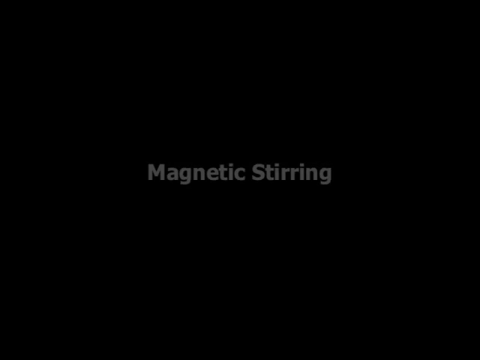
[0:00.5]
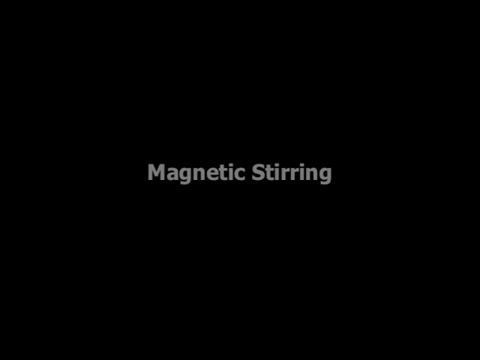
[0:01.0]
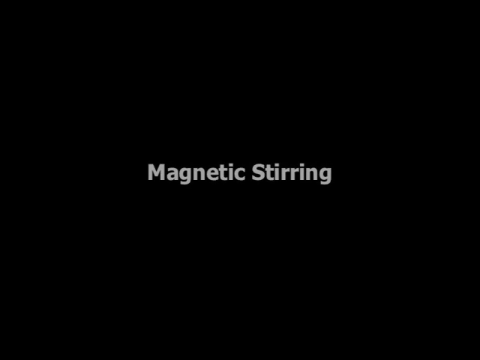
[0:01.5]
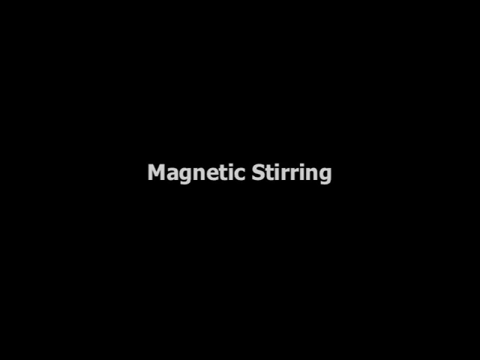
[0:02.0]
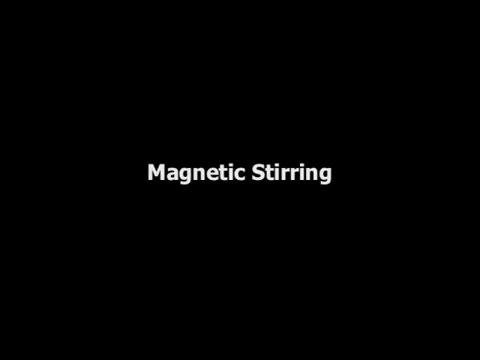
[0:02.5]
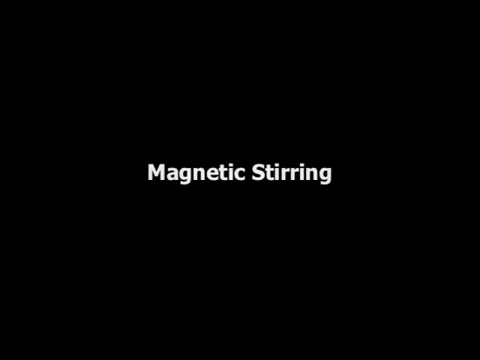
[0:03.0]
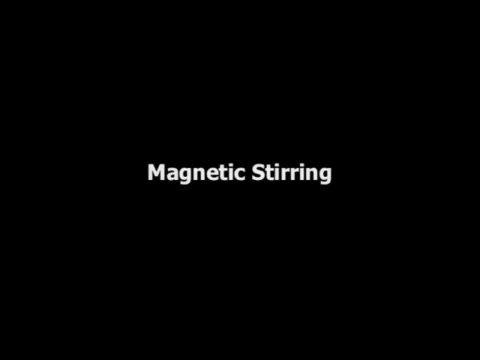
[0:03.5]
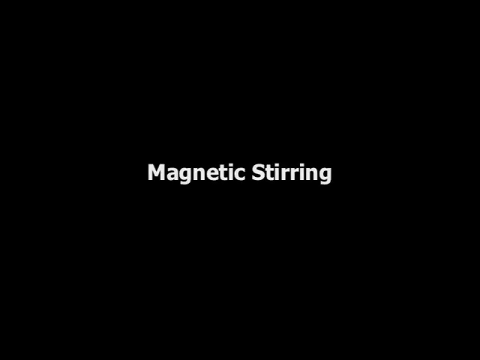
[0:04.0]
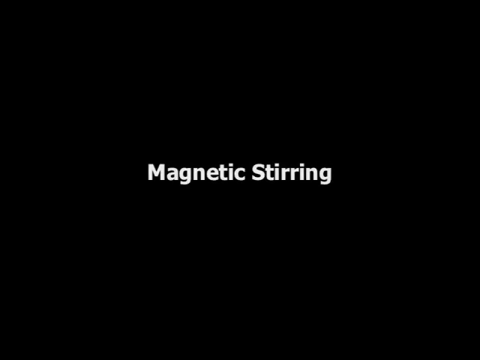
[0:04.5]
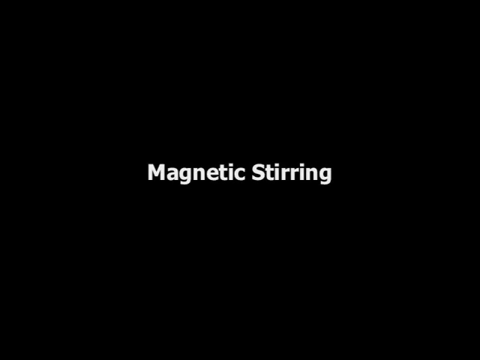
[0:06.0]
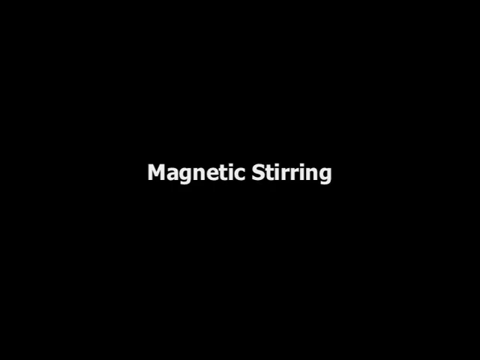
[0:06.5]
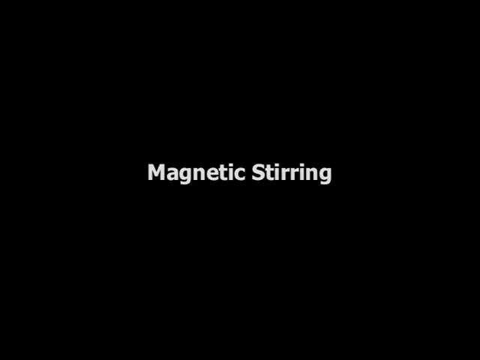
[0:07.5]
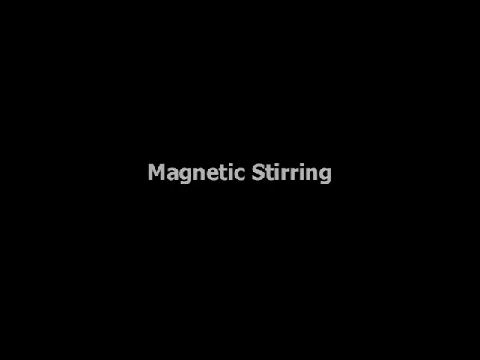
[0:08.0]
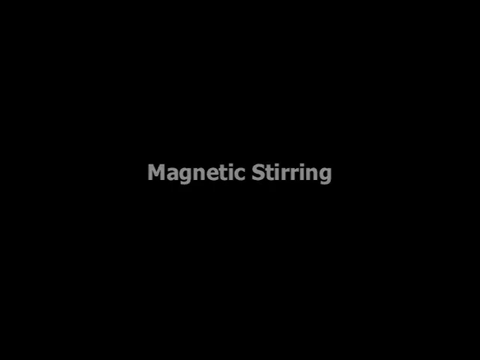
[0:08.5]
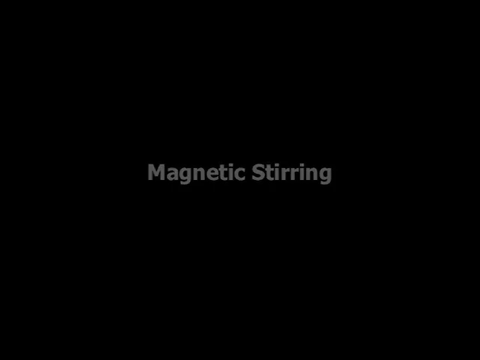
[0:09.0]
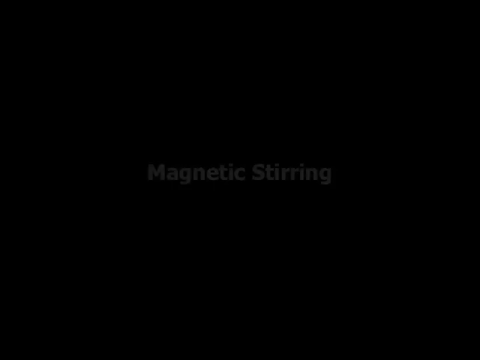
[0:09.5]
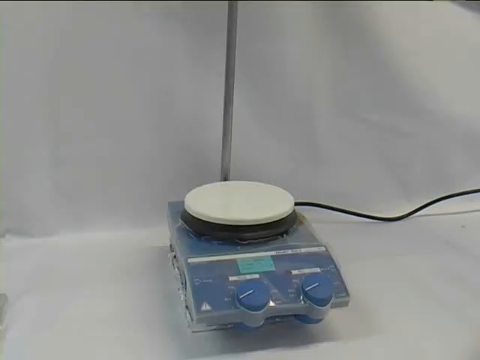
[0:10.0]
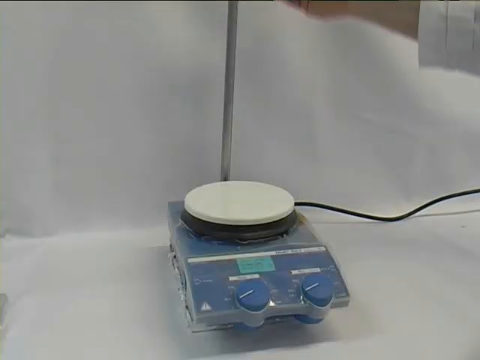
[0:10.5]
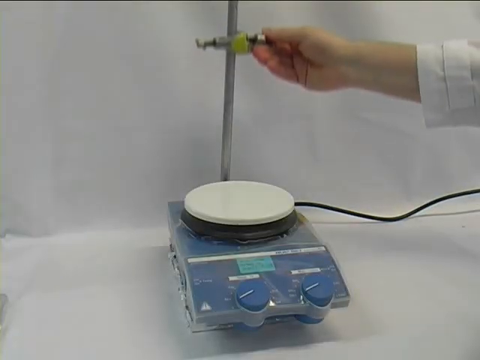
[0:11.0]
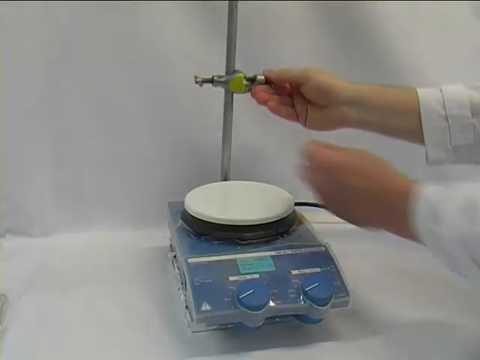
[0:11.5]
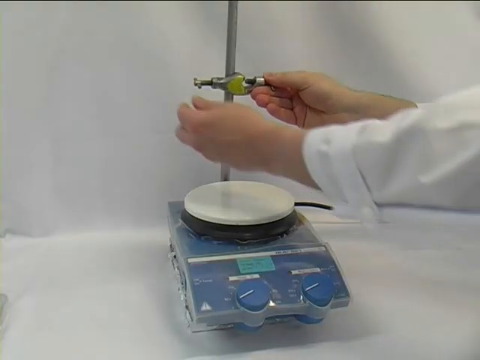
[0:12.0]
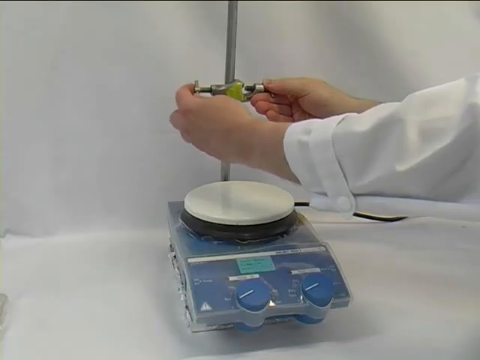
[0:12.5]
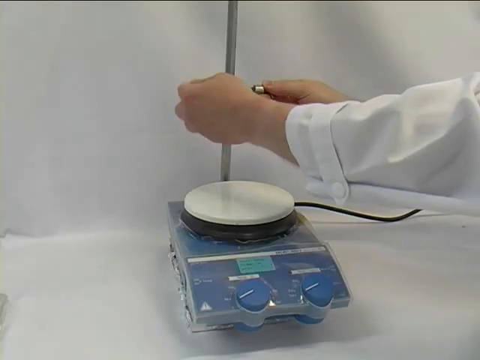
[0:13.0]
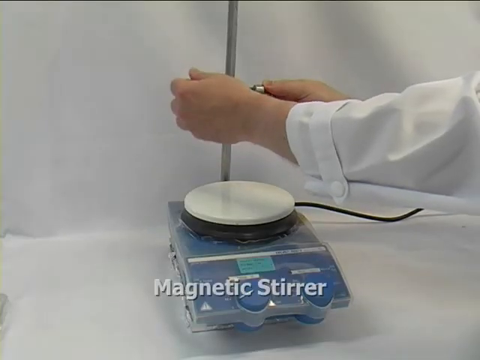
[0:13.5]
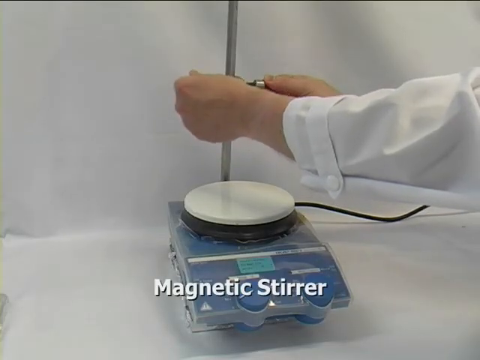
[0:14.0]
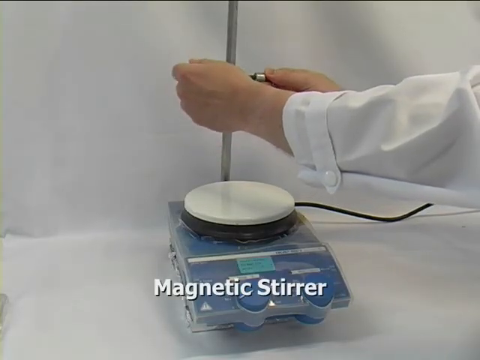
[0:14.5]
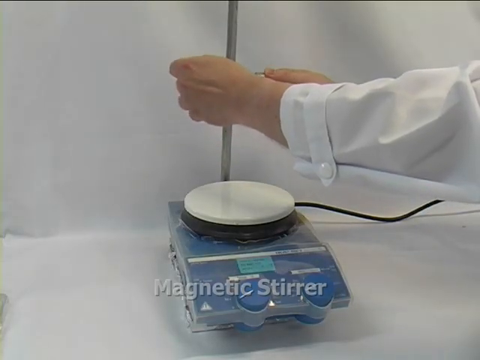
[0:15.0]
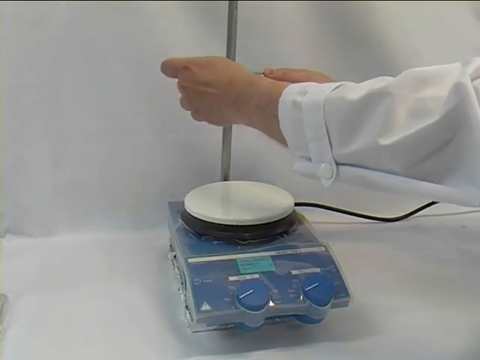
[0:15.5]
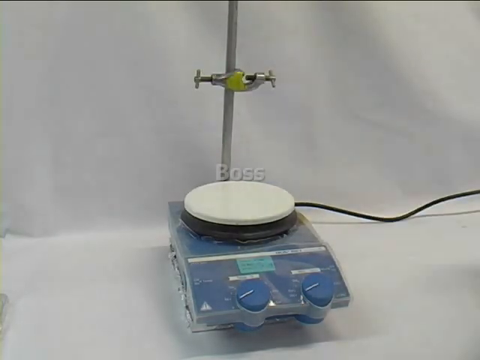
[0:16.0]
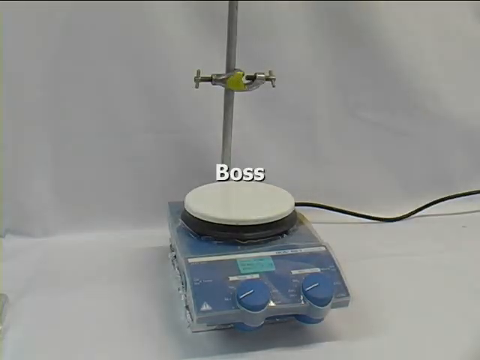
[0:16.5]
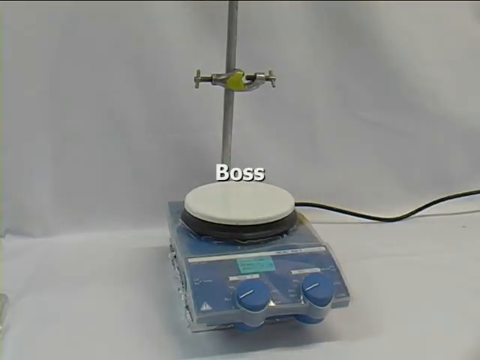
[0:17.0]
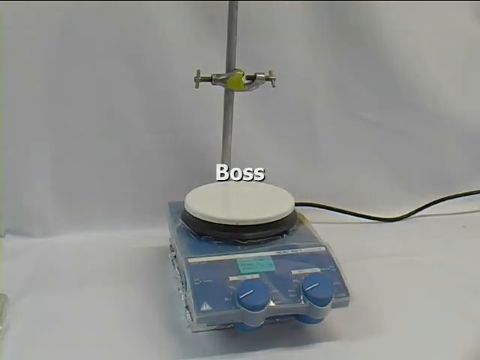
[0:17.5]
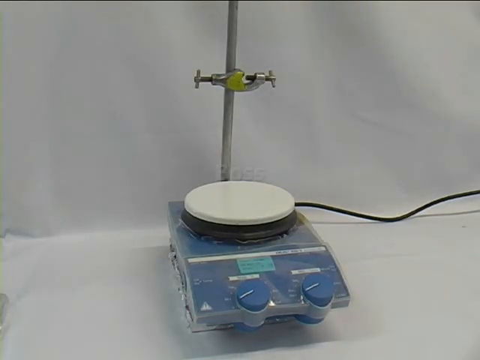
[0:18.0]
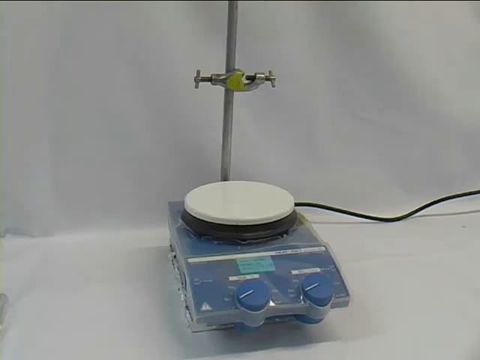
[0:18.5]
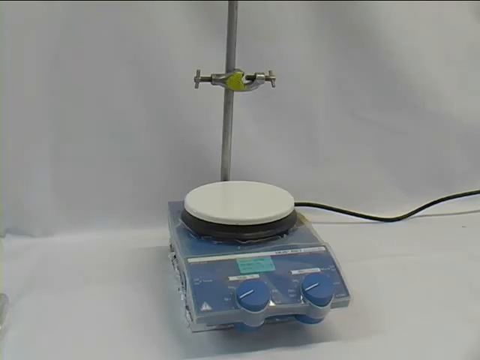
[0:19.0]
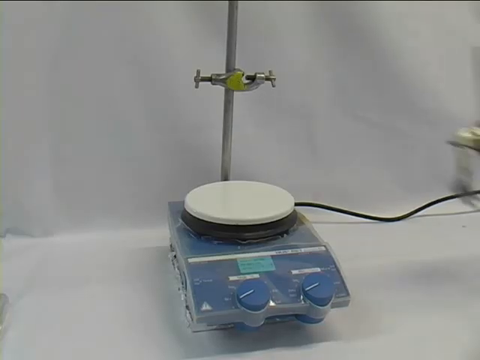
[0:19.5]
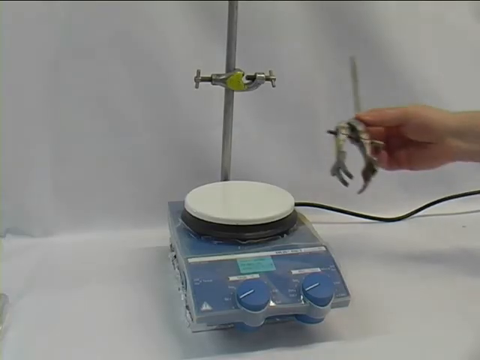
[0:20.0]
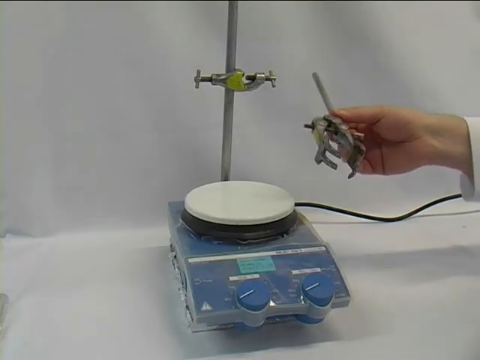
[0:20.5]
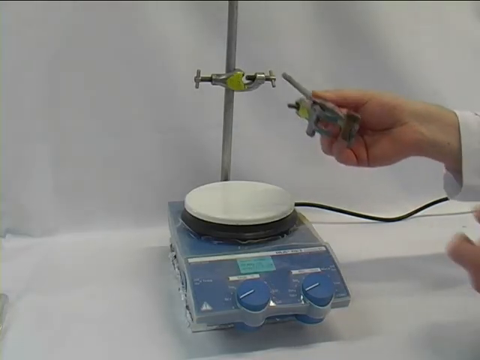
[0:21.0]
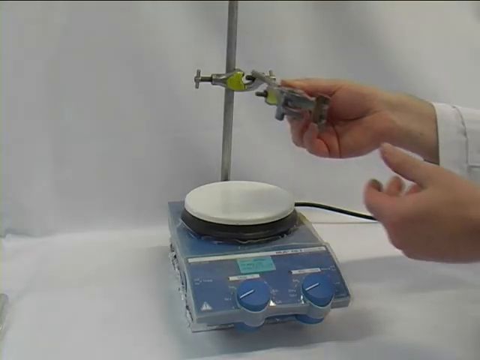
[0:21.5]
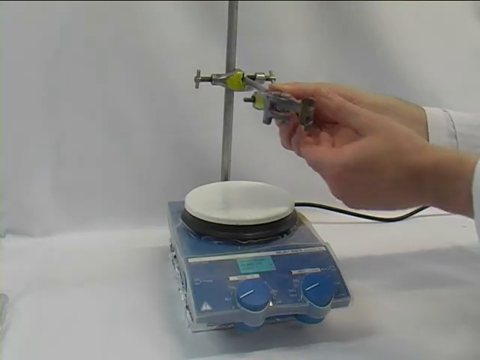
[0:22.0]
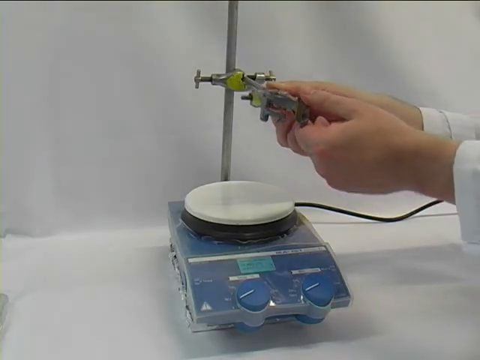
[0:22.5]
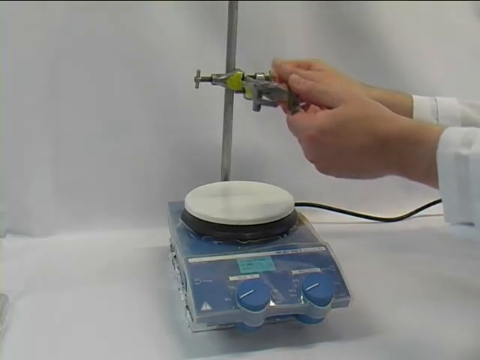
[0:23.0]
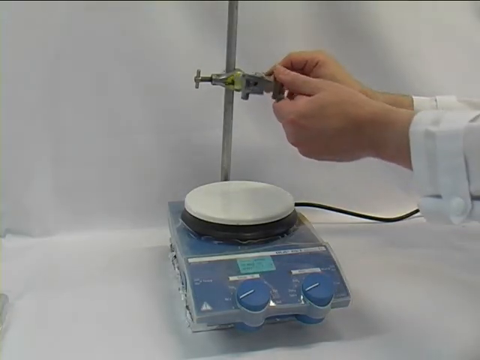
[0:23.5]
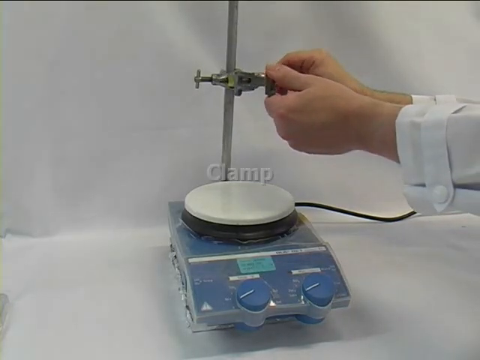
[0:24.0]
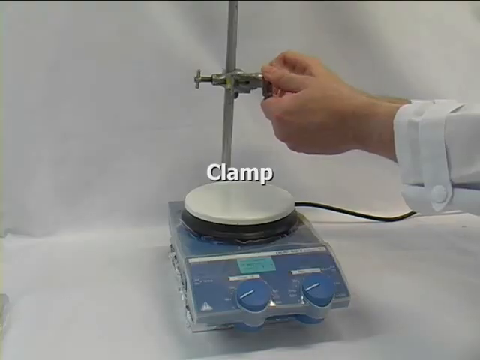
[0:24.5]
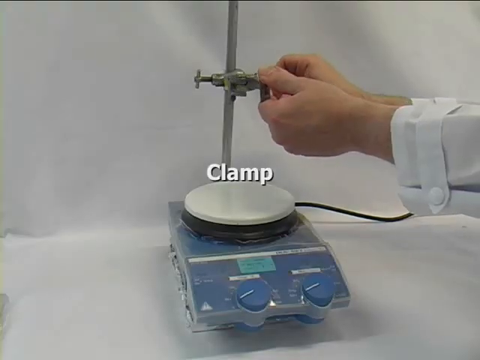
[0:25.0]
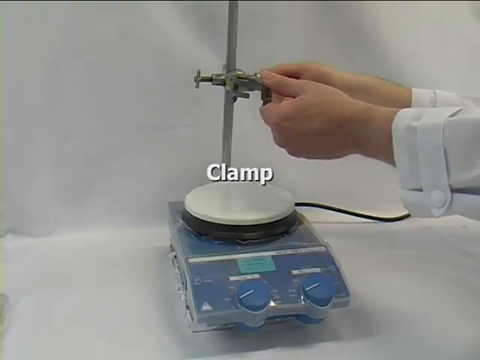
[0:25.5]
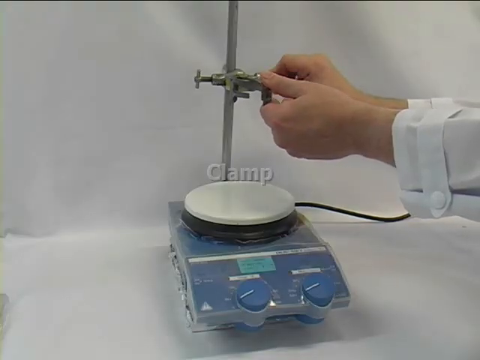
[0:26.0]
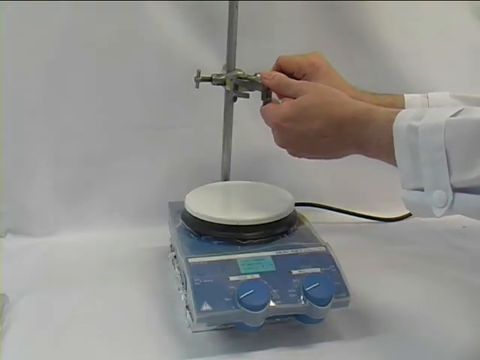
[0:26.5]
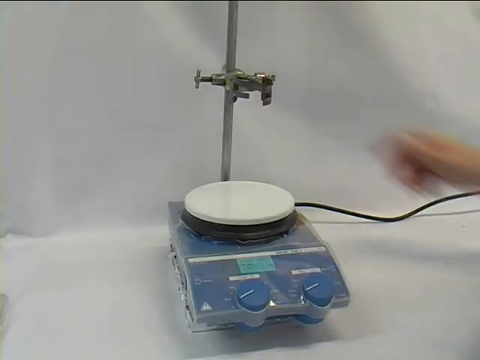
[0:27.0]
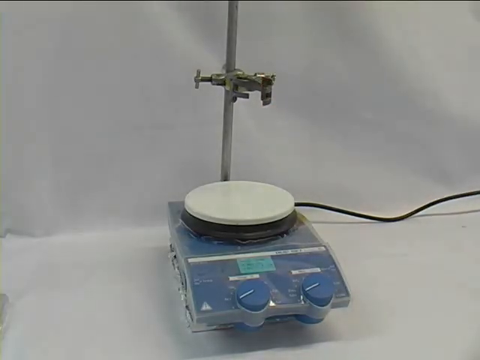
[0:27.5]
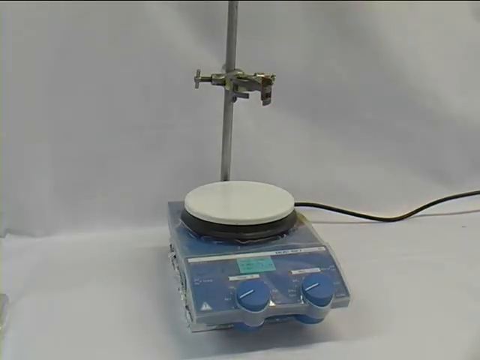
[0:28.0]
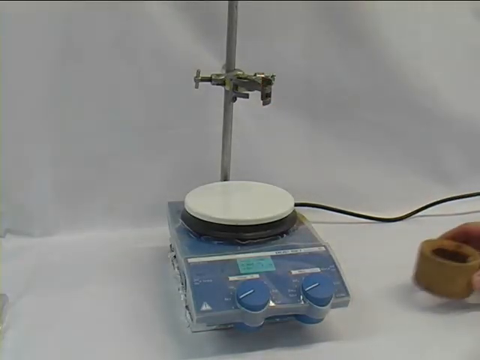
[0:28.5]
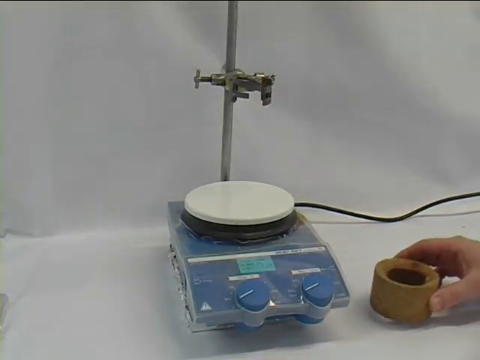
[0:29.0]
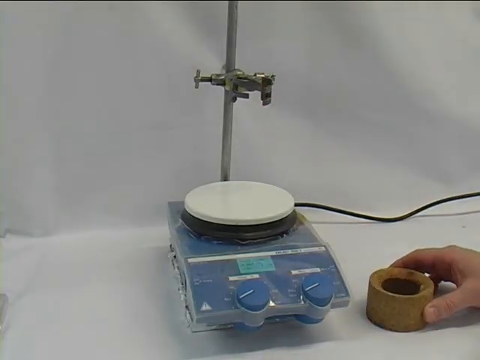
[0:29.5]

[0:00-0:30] The video begins with a black screen and white text in the middle that says "magnetic stirring." A Caucasian person with wide hands, apparently wearing a lab coat, is handling a device. The device is blue and has two blue knobs, and it looks like it has a clear coating over it, like a protective plastic coating. There is a little table on it. A cord comes out of the machine going right. The person's hands manipulate something on a rod that sticks out of the back of the device, turning a nut on the left-hand side of what they are holding. White text at the bottom middle says "magnetic stir." White text then appears in the center and says "boss." The person attaches something else to the rod sticking out of the back of the device, and white text appears in the middle saying "clamp."